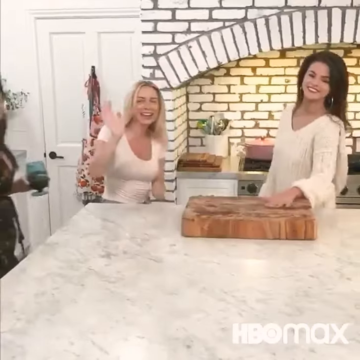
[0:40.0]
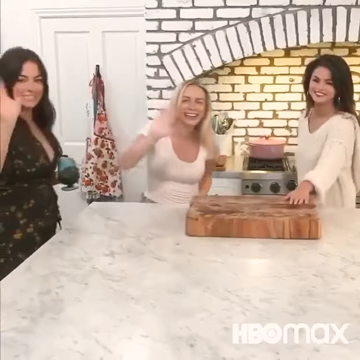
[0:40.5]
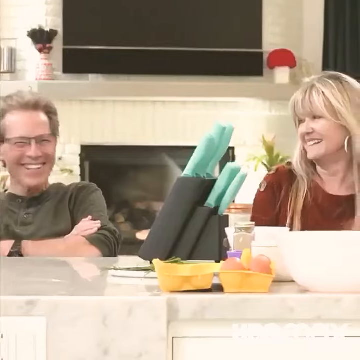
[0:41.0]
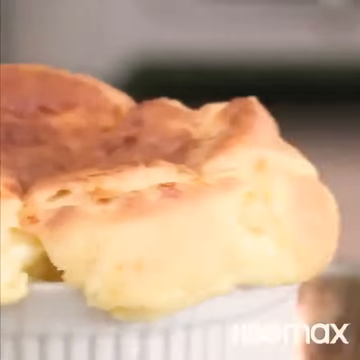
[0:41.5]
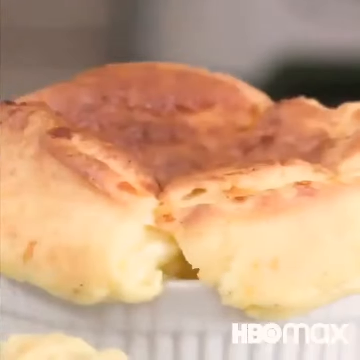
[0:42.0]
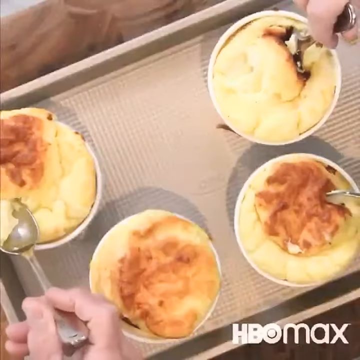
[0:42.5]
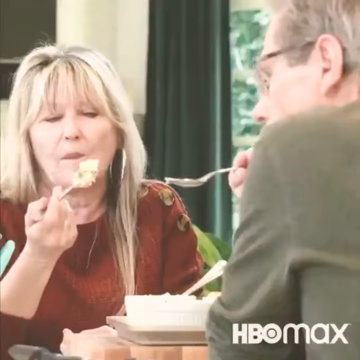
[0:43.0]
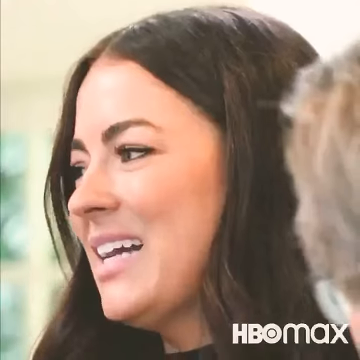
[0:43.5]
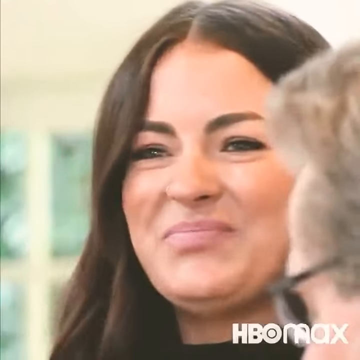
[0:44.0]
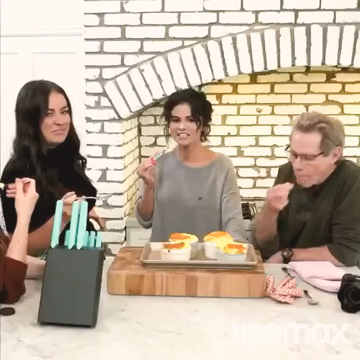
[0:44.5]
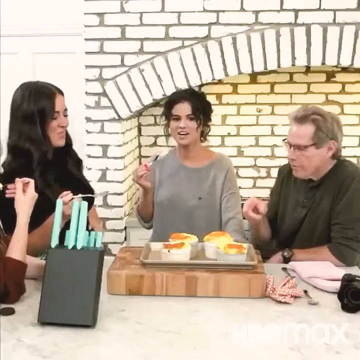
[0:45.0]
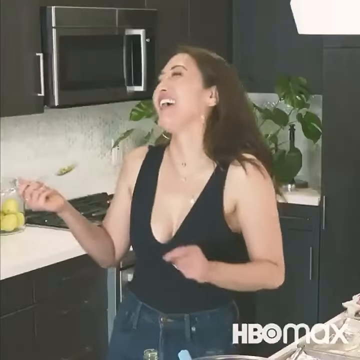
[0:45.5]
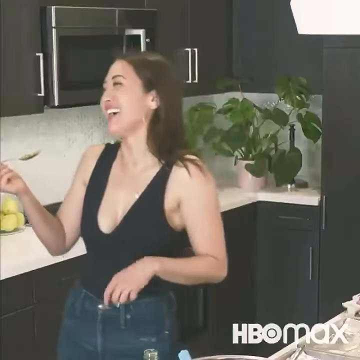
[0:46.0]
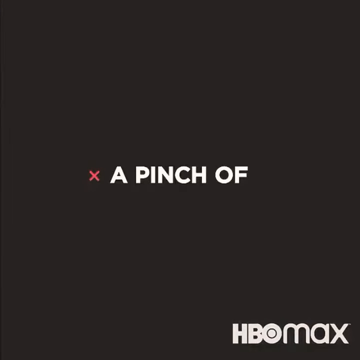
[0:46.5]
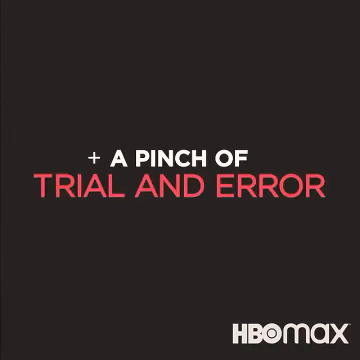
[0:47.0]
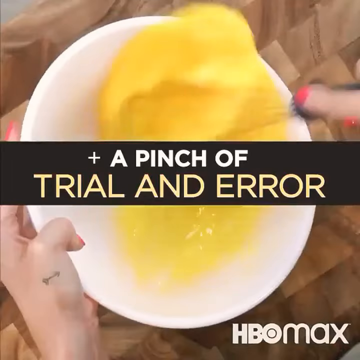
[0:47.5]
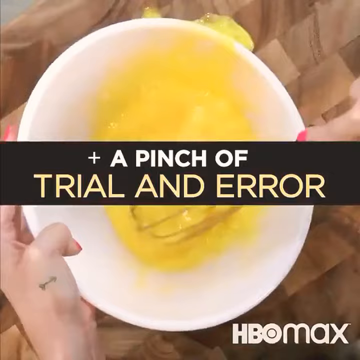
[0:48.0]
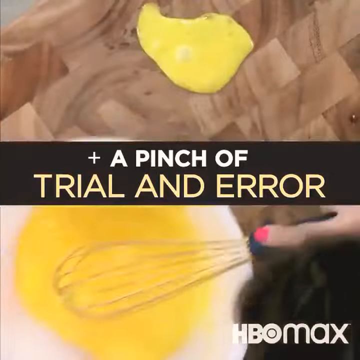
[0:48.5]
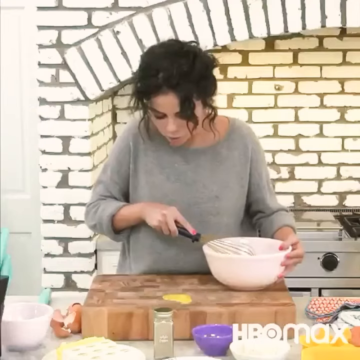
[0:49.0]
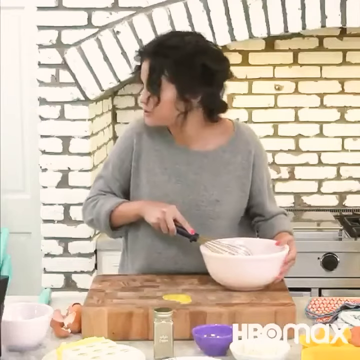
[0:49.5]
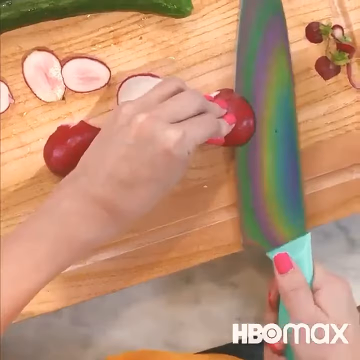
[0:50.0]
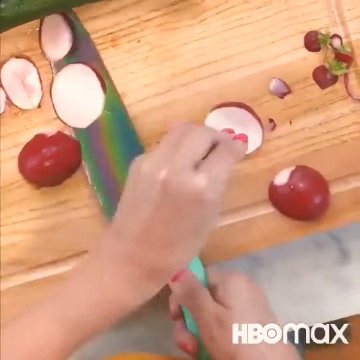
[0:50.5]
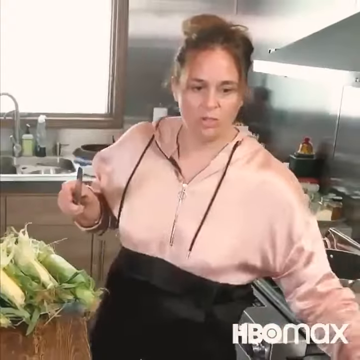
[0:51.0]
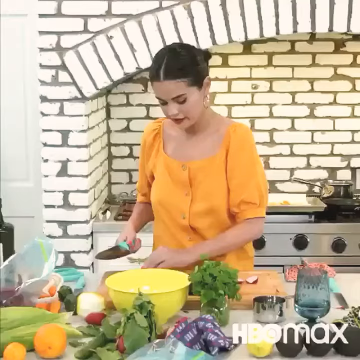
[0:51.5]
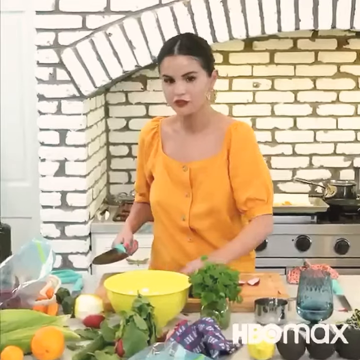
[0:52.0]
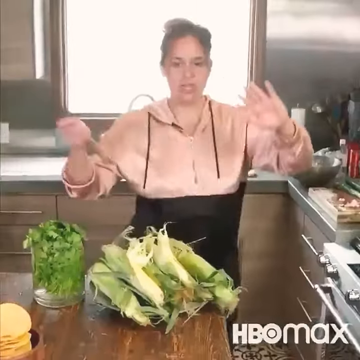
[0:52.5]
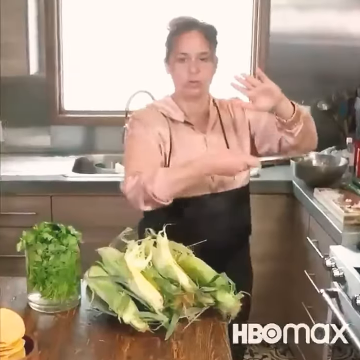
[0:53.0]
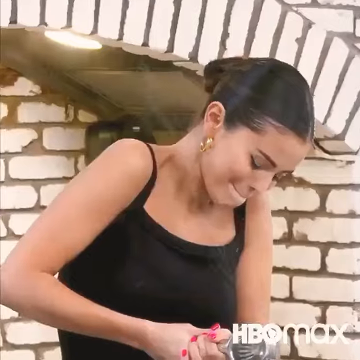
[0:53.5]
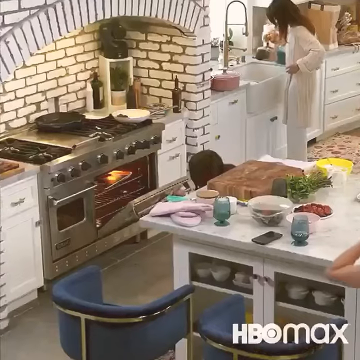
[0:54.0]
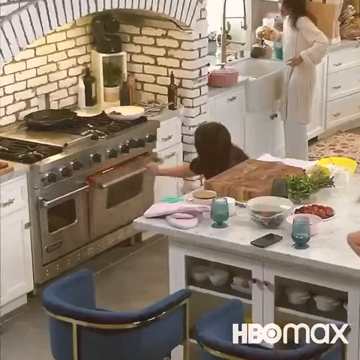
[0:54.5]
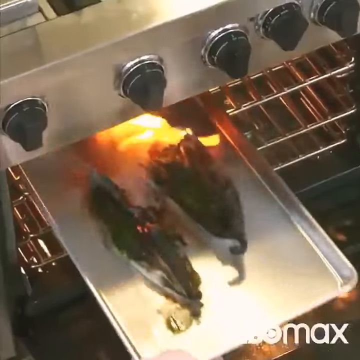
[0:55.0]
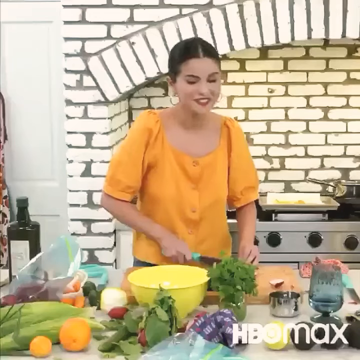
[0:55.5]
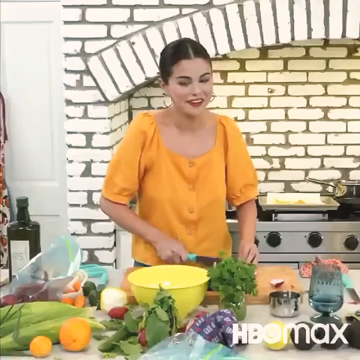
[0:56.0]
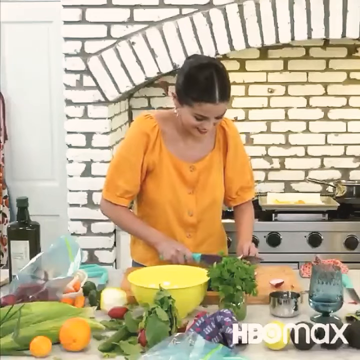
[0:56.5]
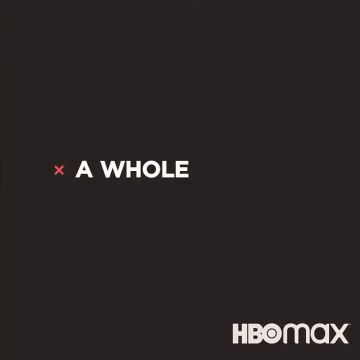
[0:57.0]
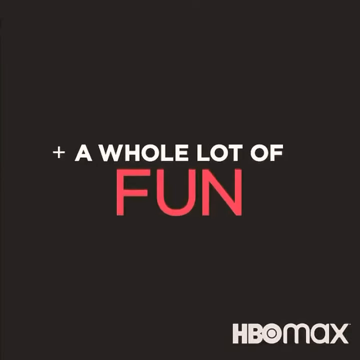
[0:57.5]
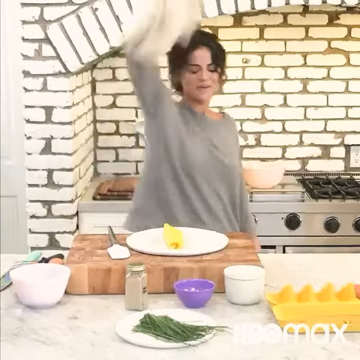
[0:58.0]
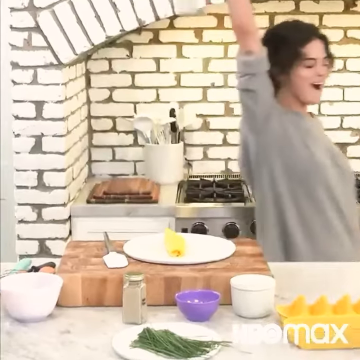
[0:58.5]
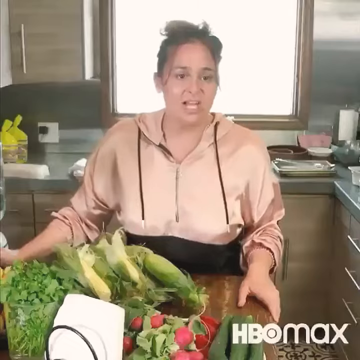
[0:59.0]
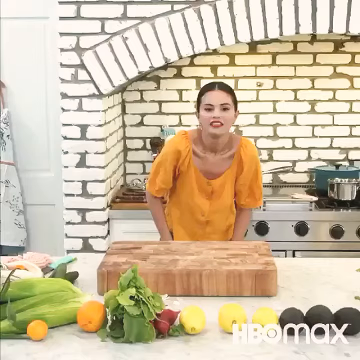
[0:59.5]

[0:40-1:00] Participants continue to appear doing tasks on the program. Among several short clips, two women and a man taste what was made by two of the competitors. The participants laugh. Text on the screen reads "A Pinch of Trial and Error"; it looks like some of the competitors are amateurs. Then the screen reads "A Whole Lot of Fun".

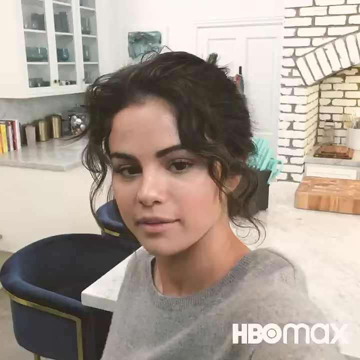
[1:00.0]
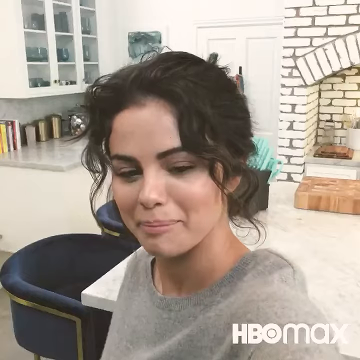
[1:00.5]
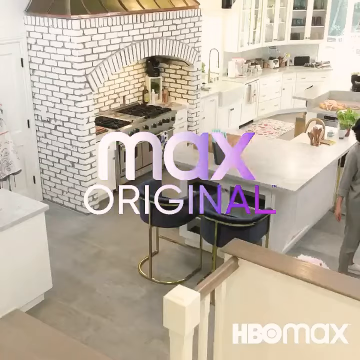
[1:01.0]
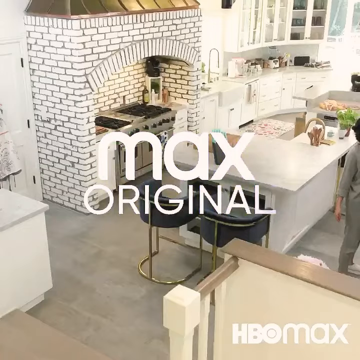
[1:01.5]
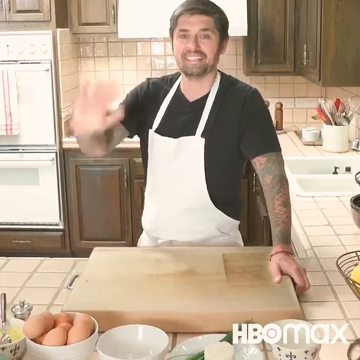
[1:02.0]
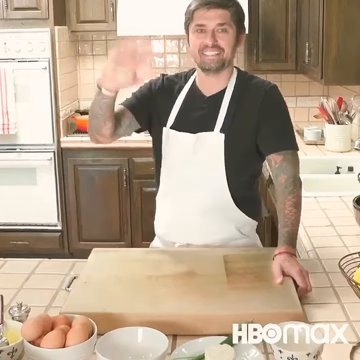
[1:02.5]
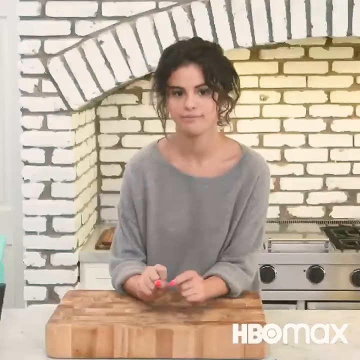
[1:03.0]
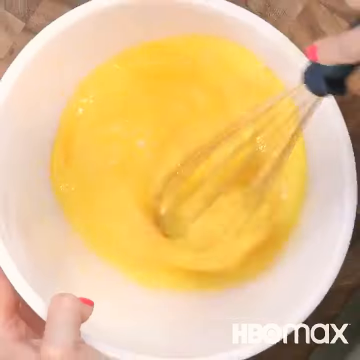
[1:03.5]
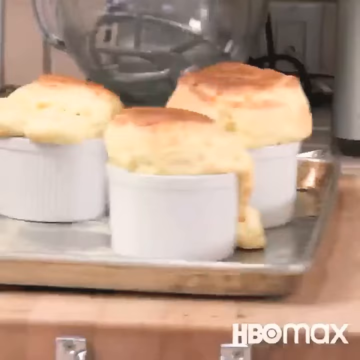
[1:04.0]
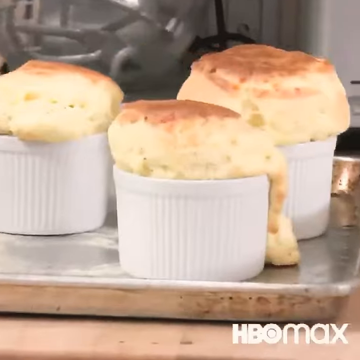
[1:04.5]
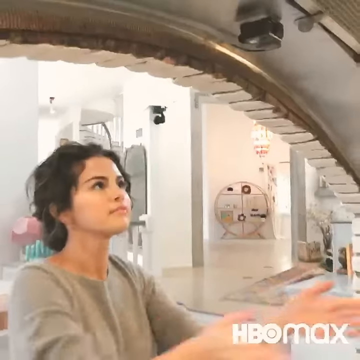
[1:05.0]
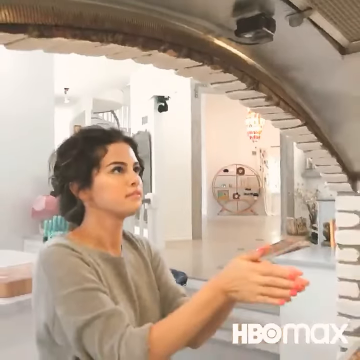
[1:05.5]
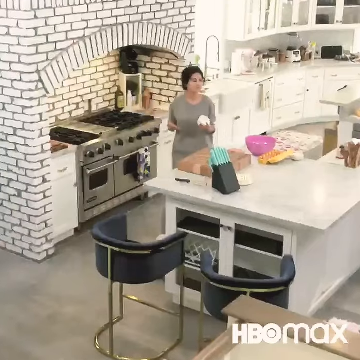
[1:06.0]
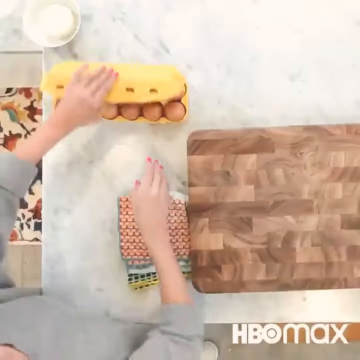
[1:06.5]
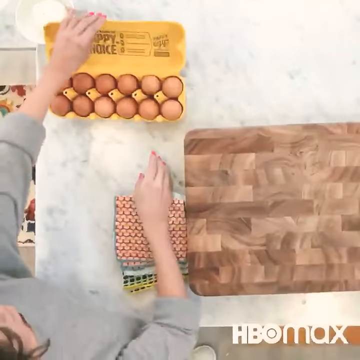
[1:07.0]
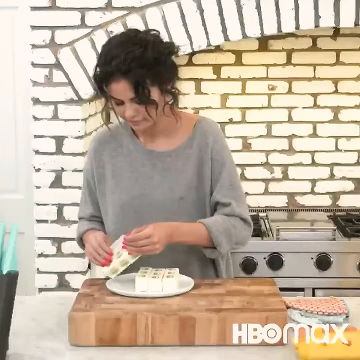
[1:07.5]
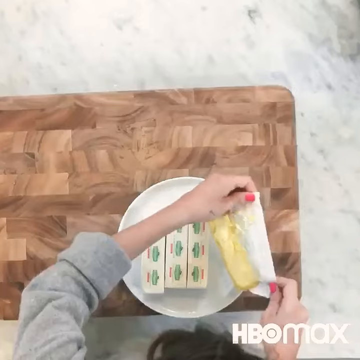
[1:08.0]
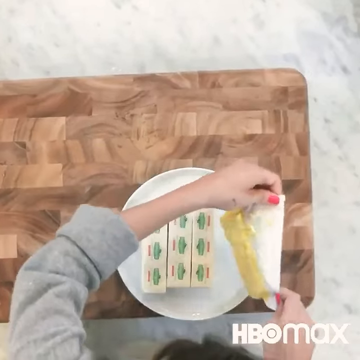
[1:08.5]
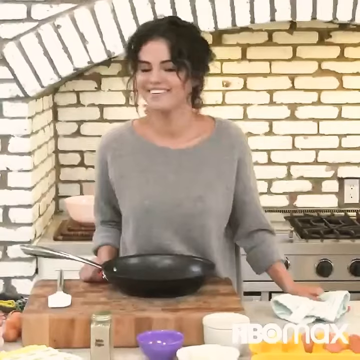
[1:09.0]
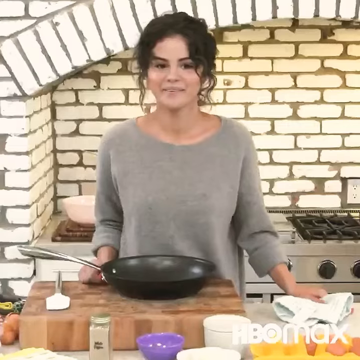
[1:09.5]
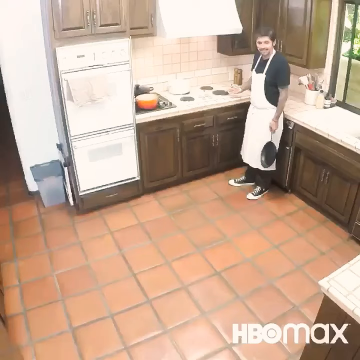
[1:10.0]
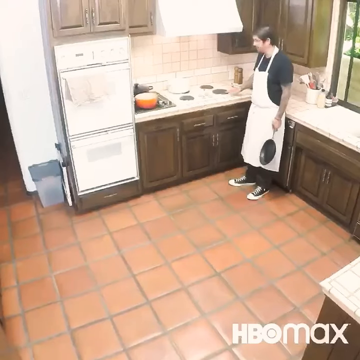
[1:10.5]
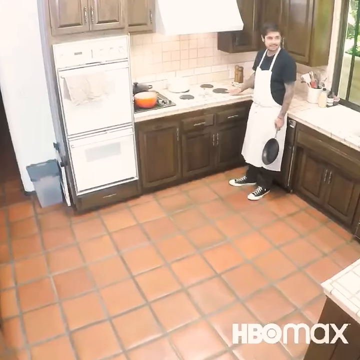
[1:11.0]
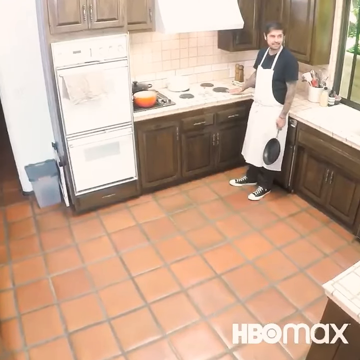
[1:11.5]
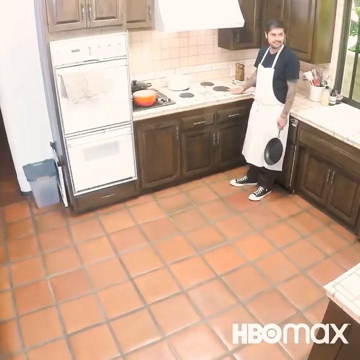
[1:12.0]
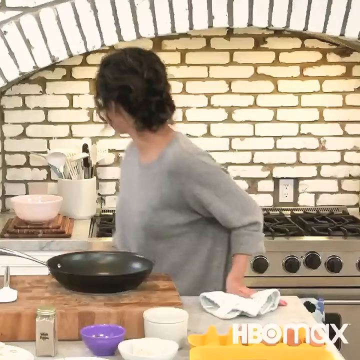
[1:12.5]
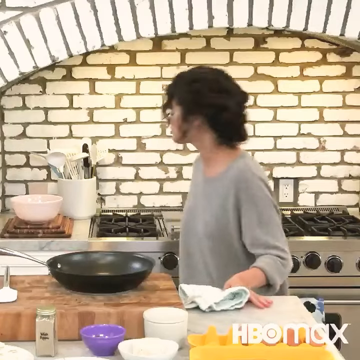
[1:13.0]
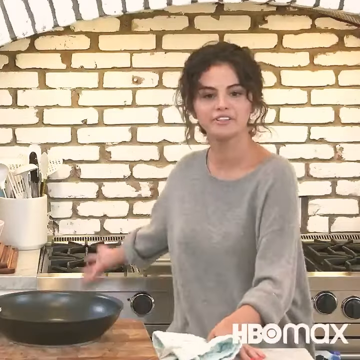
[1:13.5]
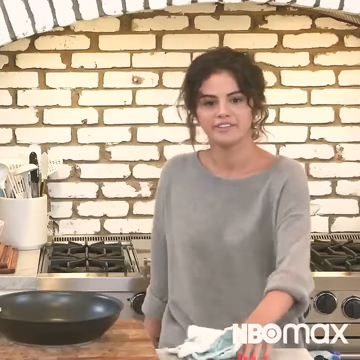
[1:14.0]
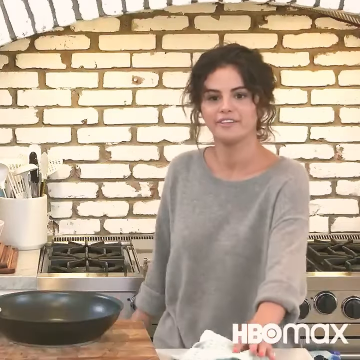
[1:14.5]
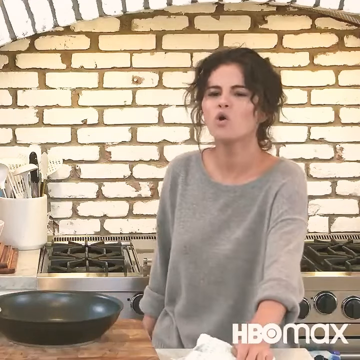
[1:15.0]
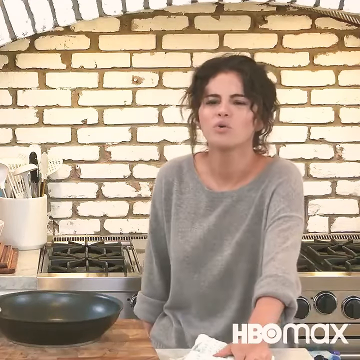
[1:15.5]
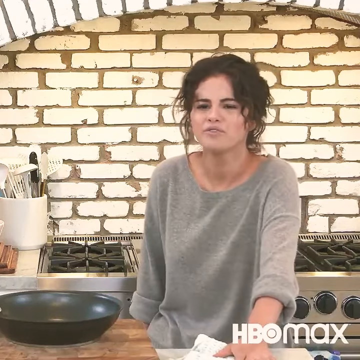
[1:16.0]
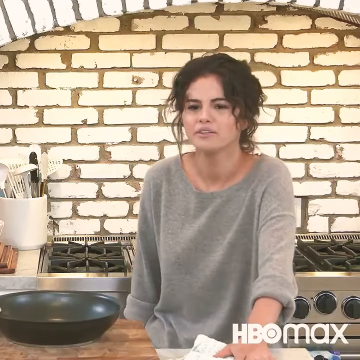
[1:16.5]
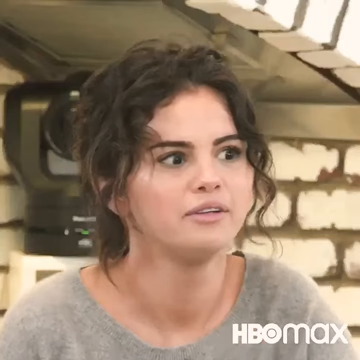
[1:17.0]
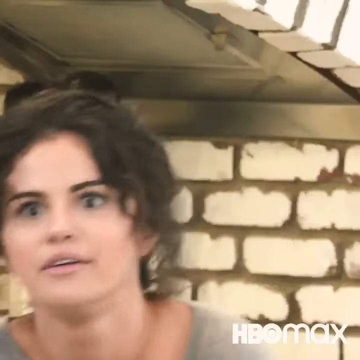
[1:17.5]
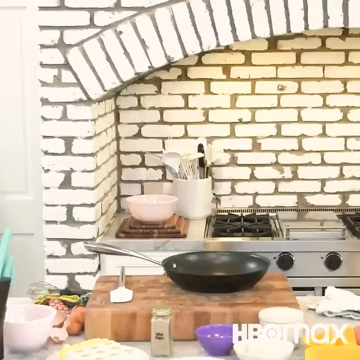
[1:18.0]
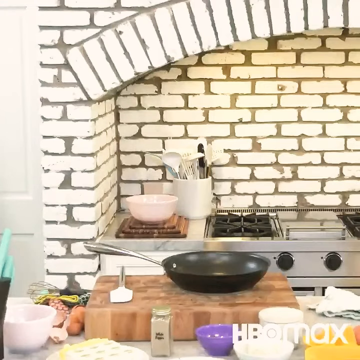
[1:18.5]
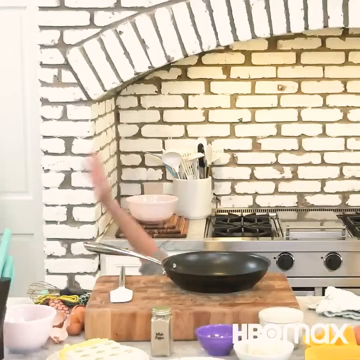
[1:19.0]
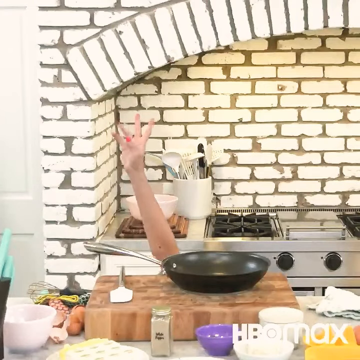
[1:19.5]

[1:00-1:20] "Max Original" is displayed prominently in very large purple text in the middle of the screen. The participants are shown one by one: women and men of various races. Various foods made by the participants appear, some beautiful and some not so much.